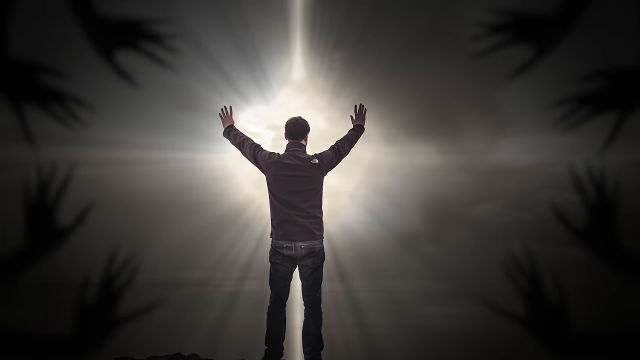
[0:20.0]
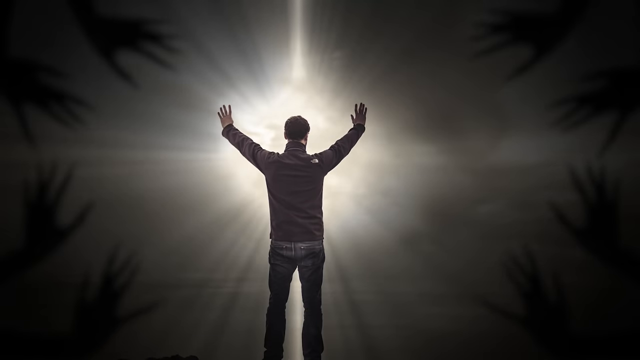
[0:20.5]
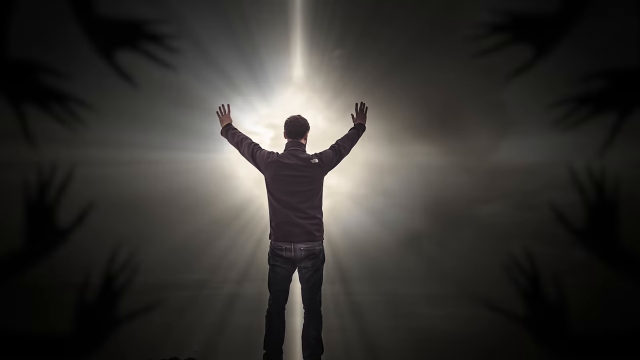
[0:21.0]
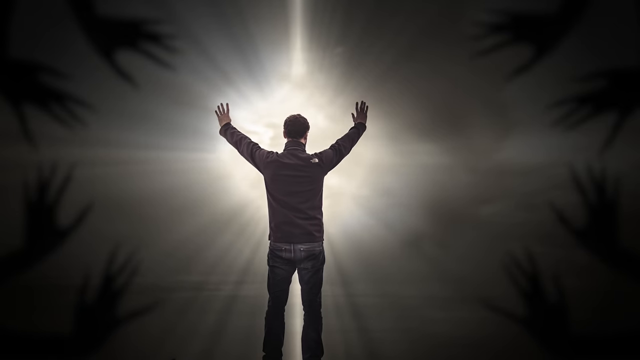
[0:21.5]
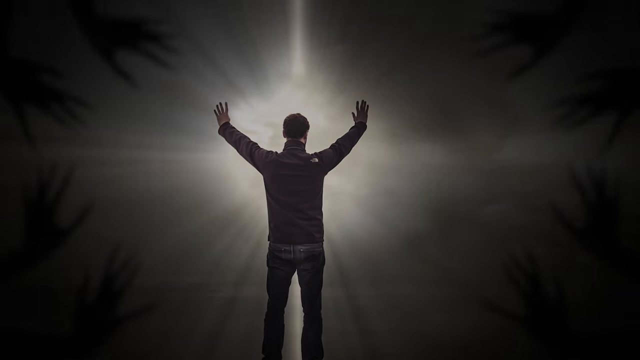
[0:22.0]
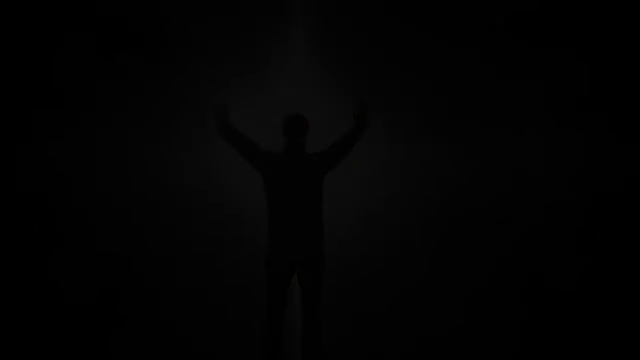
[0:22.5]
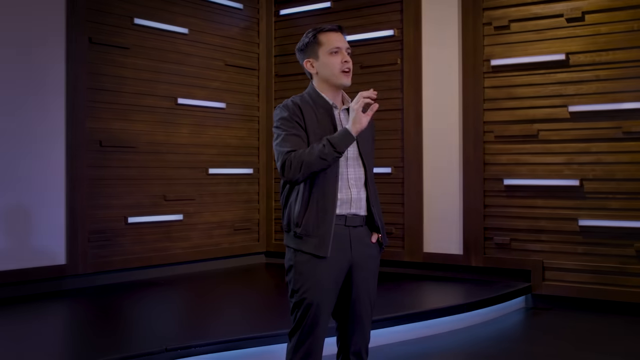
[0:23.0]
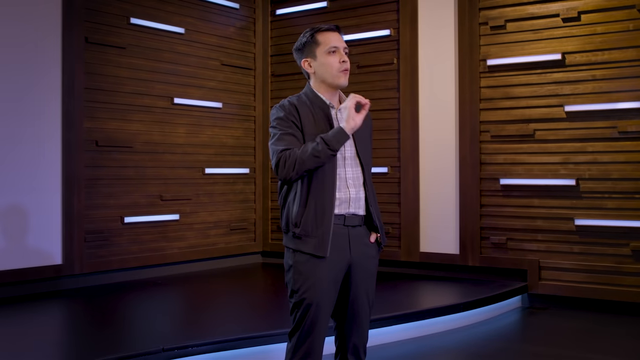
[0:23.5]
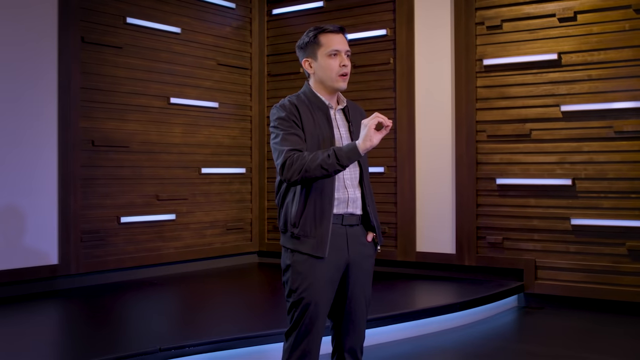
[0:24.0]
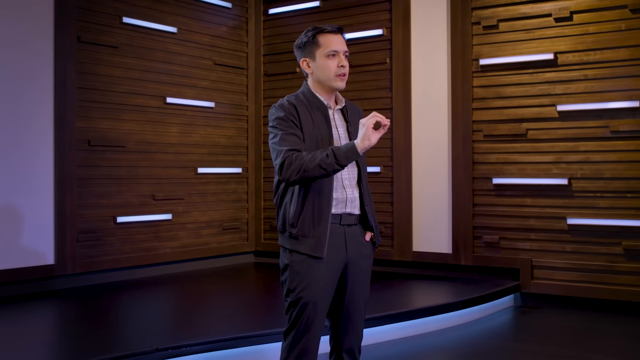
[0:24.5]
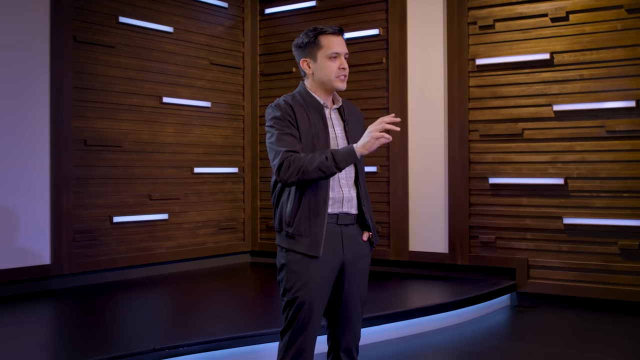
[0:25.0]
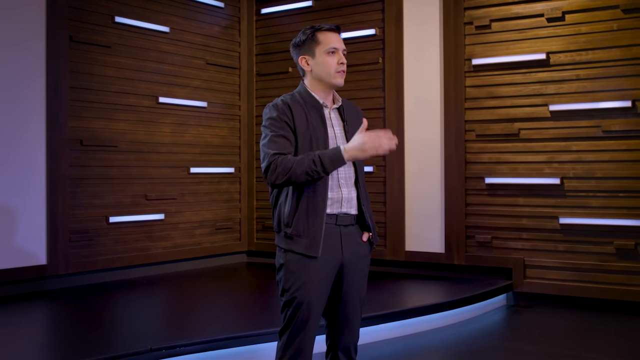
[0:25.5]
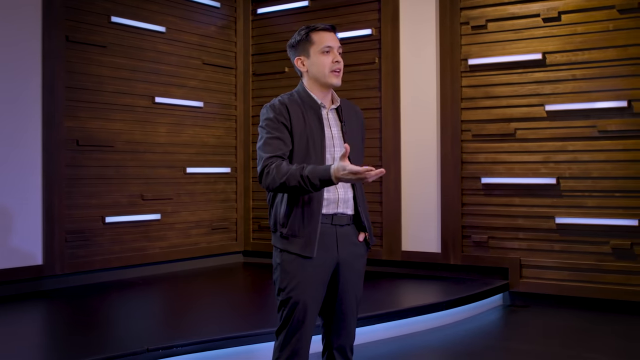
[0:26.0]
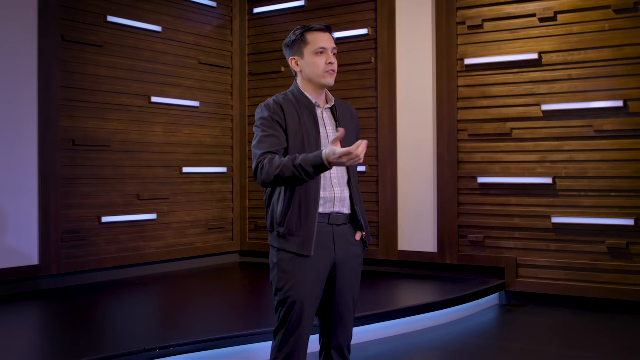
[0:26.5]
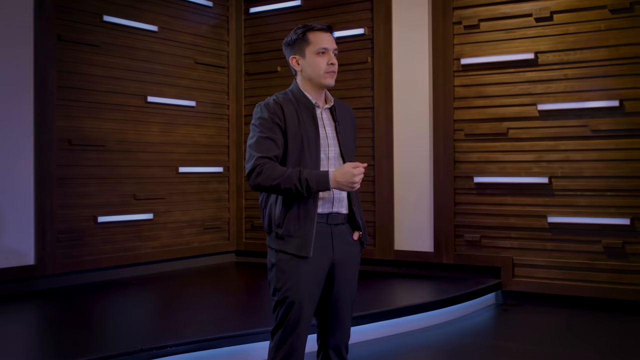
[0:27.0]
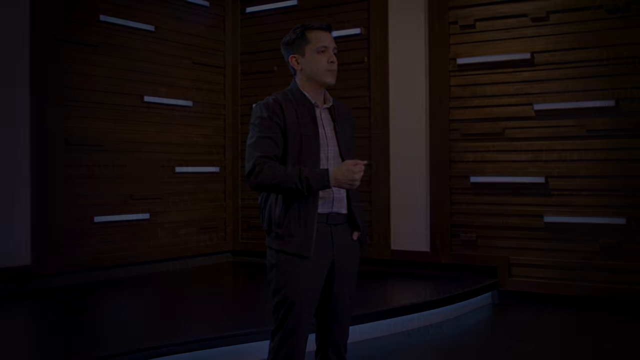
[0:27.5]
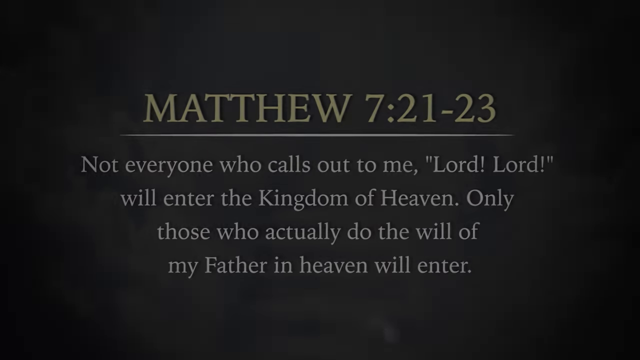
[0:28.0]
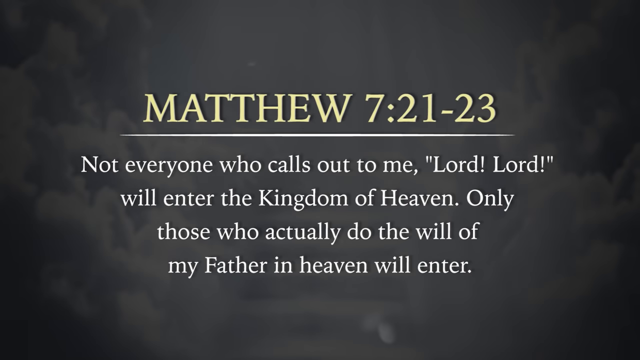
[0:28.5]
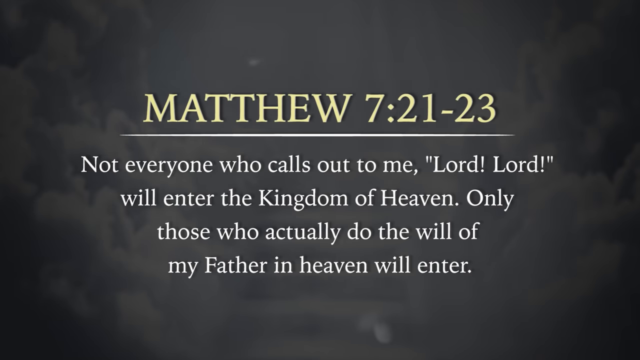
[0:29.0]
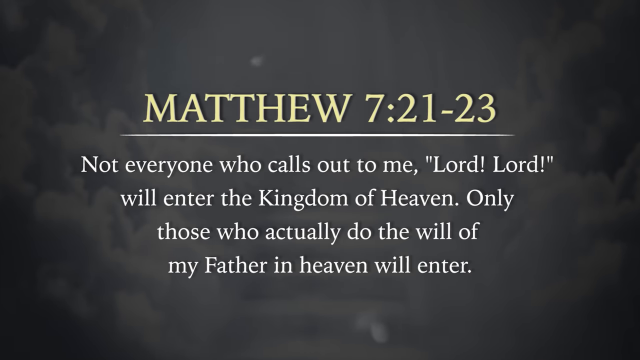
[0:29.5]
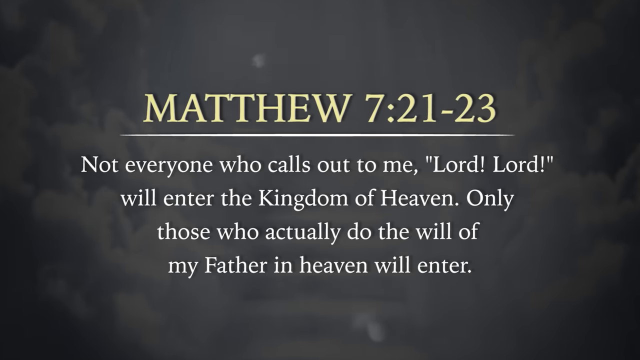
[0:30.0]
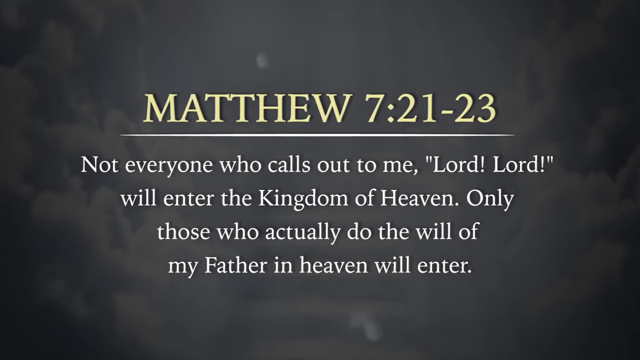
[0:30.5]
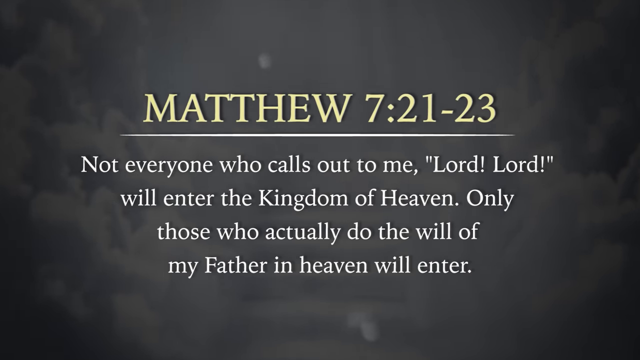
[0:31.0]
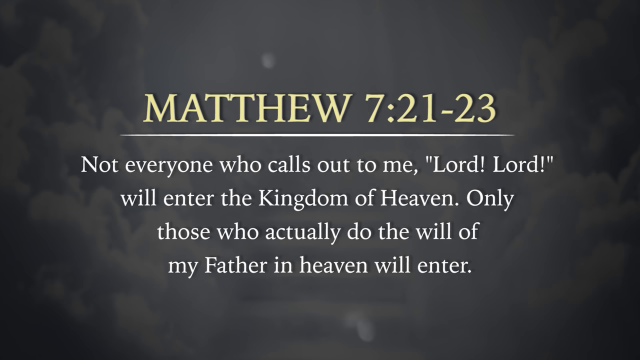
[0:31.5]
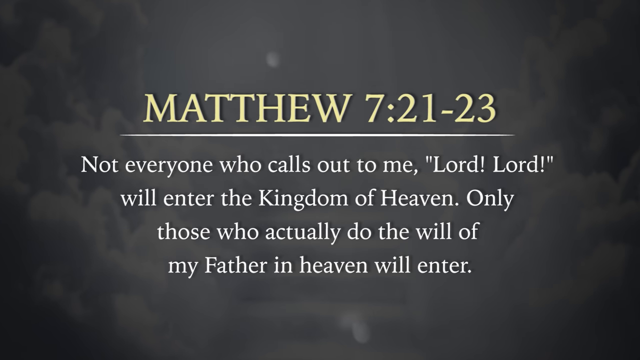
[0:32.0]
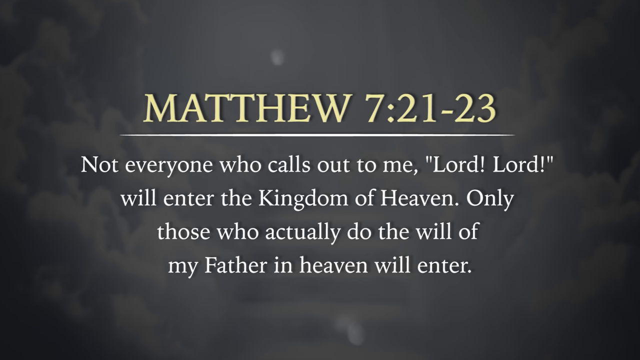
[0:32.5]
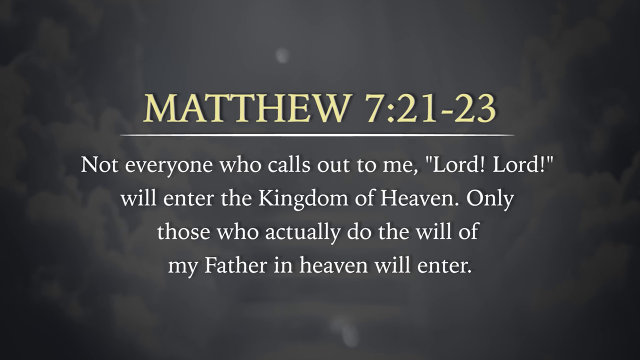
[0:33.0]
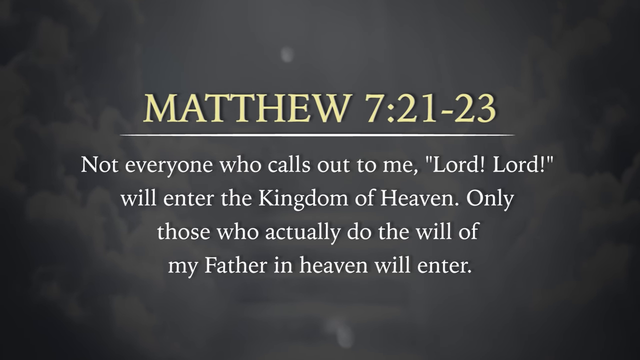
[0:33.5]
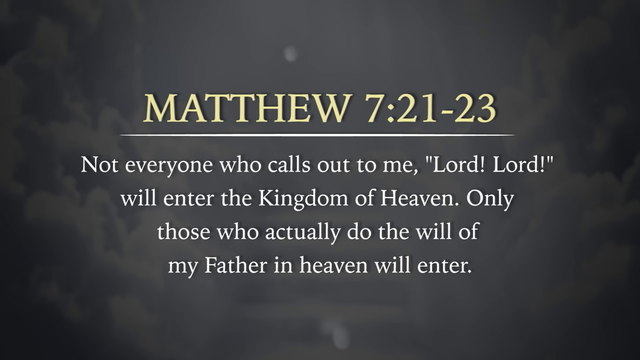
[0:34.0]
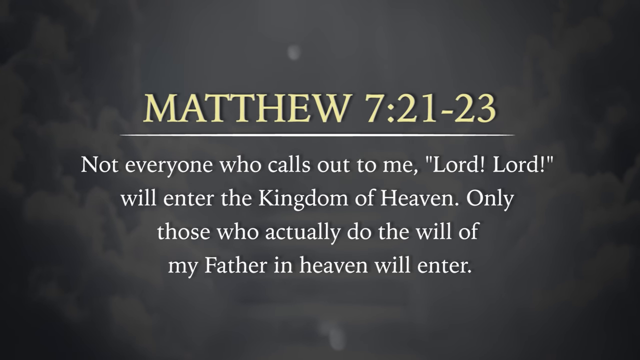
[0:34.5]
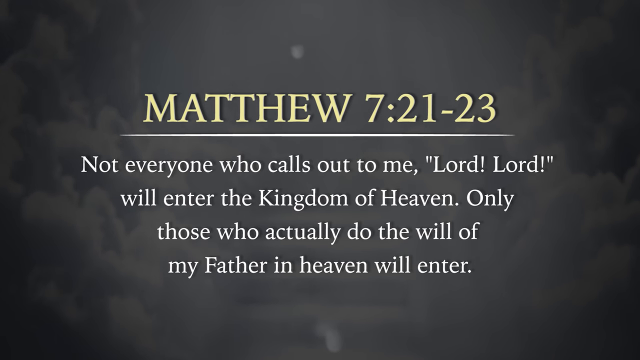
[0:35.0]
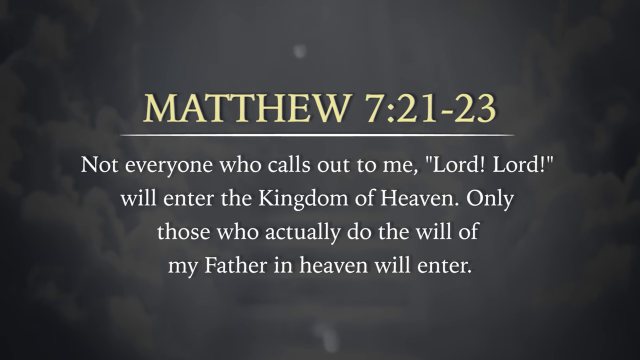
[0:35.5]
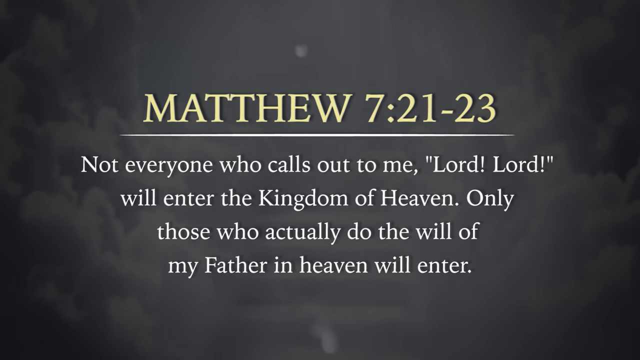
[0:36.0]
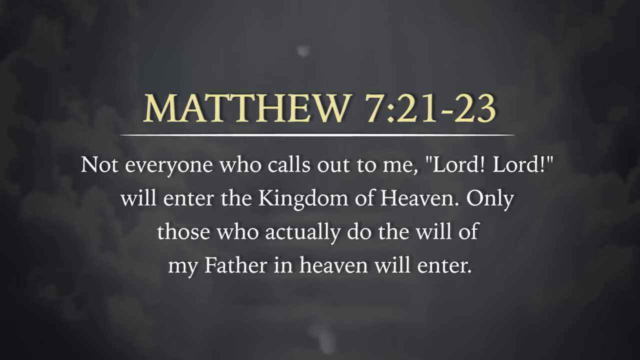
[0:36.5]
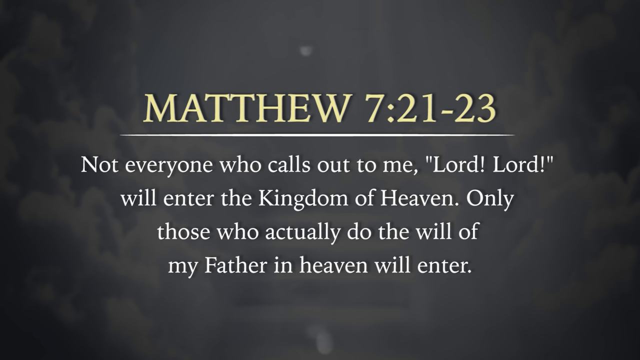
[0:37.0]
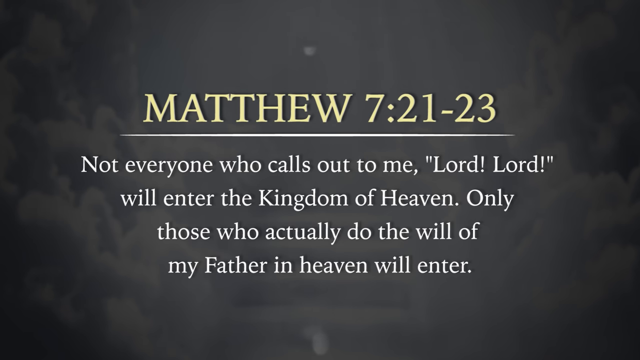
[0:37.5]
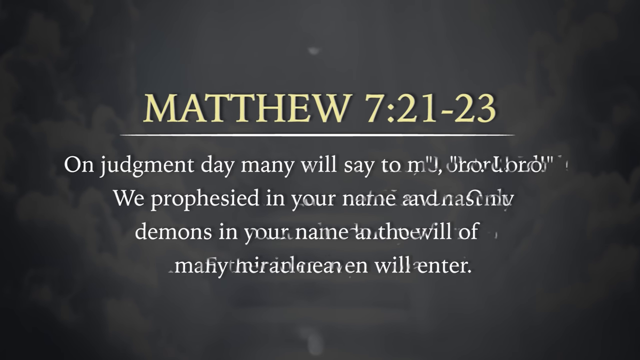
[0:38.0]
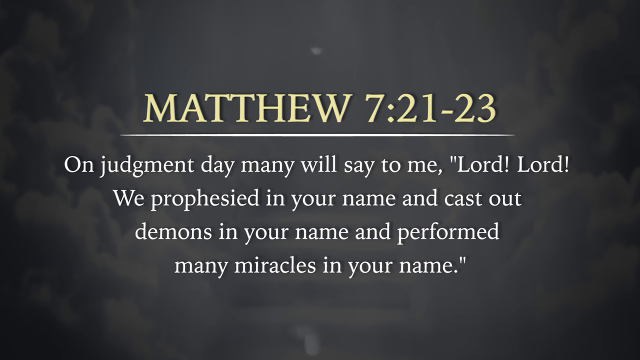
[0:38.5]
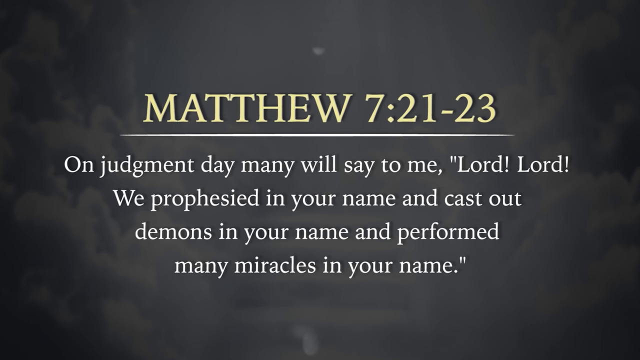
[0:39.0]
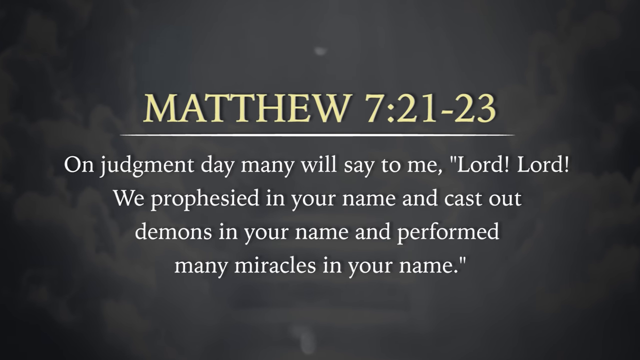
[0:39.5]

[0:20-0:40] A man stands in the middle of the screen with both arms raised. On the left and right sides of the screen, black hands point toward the center of the frame. In front of the man is a very light yellow light source, and the background all around is black. Next, a standing man wearing a dark jacket, black pants and a light-colored shirt gesticulates with his right hand. The following shot shows a dark-background screen with a white dot at the top that moves slowly to the right. In the center is a paragraph of white text lines, with larger yellow text at the top. Near the end, the white paragraph gives way to another paragraph with different words, also in white.